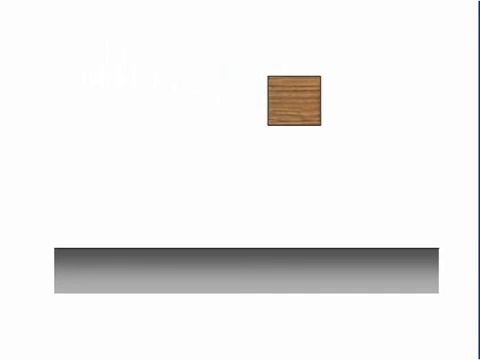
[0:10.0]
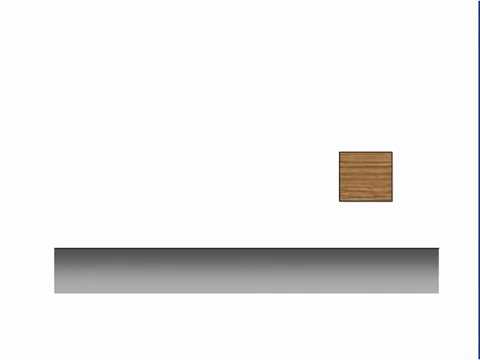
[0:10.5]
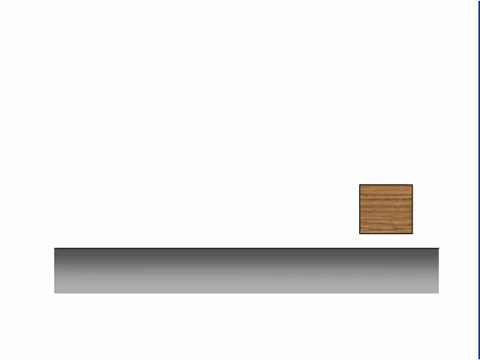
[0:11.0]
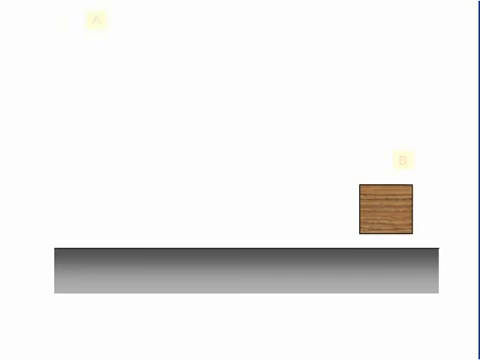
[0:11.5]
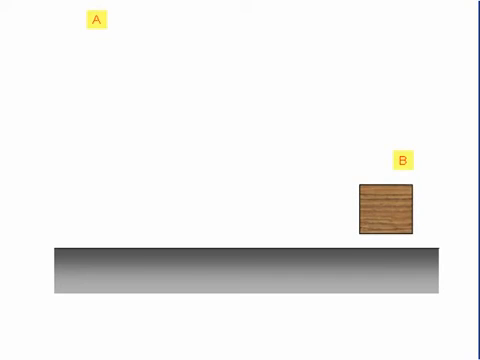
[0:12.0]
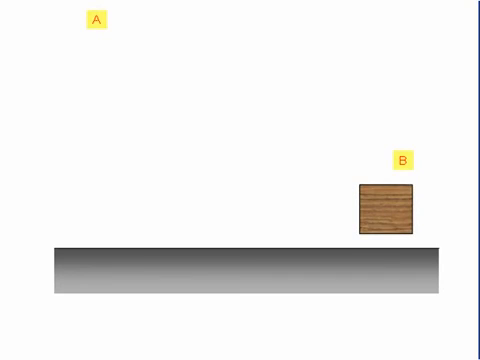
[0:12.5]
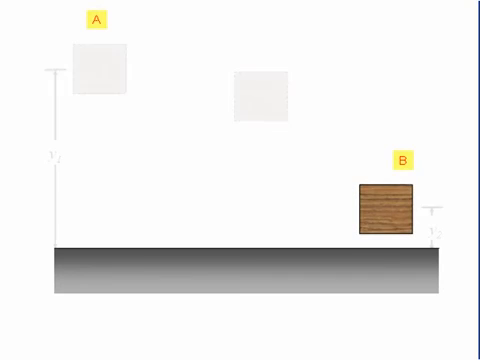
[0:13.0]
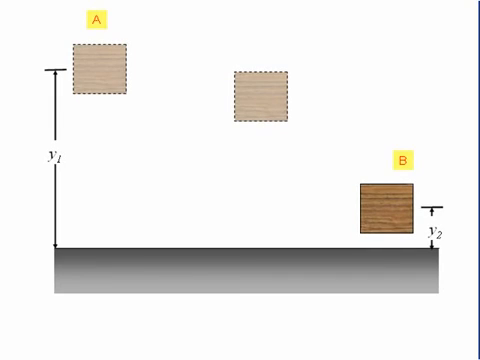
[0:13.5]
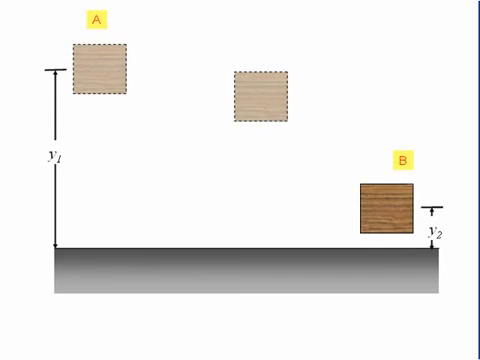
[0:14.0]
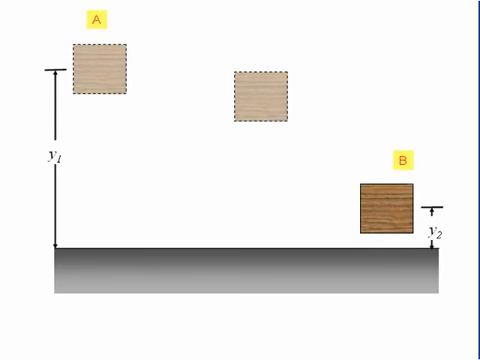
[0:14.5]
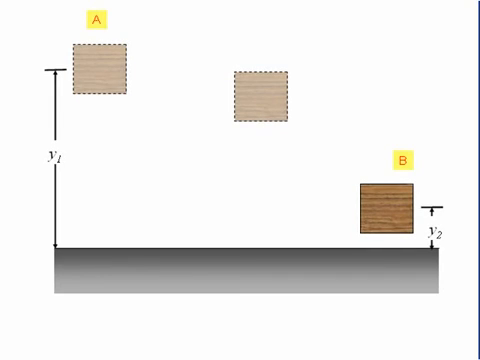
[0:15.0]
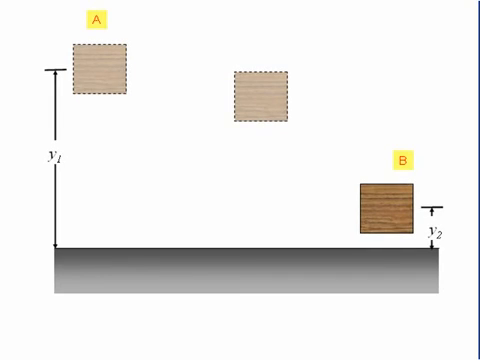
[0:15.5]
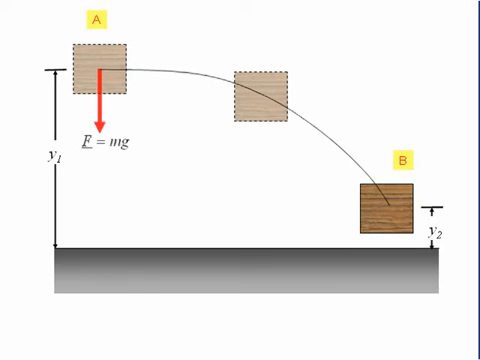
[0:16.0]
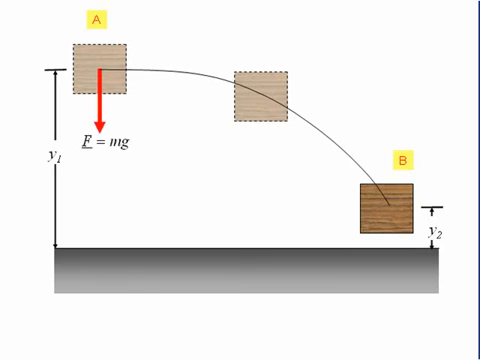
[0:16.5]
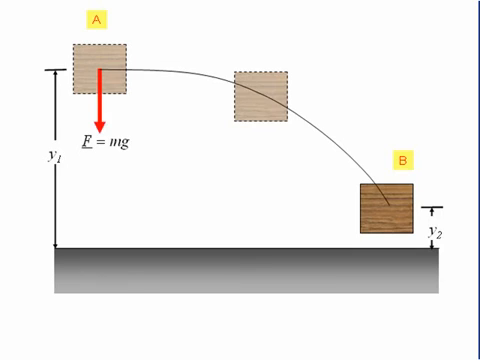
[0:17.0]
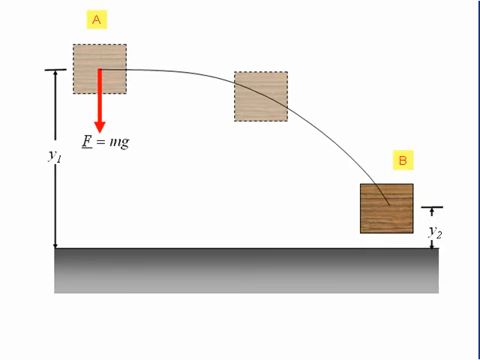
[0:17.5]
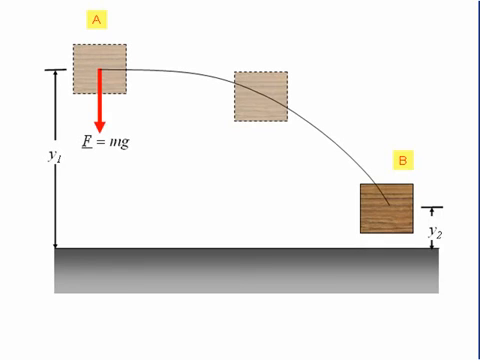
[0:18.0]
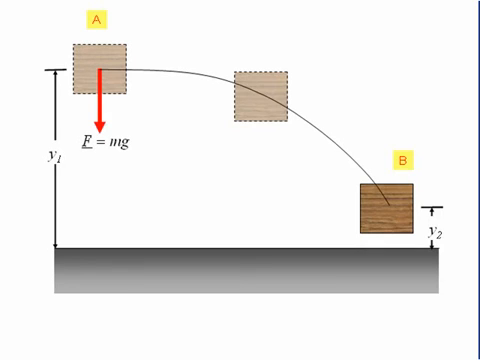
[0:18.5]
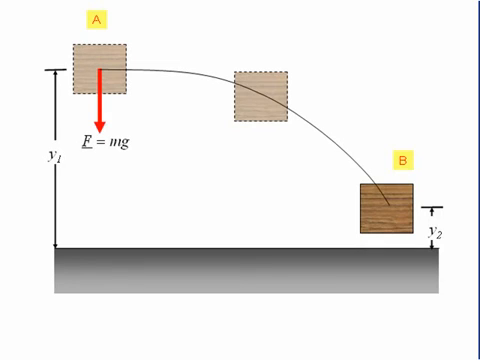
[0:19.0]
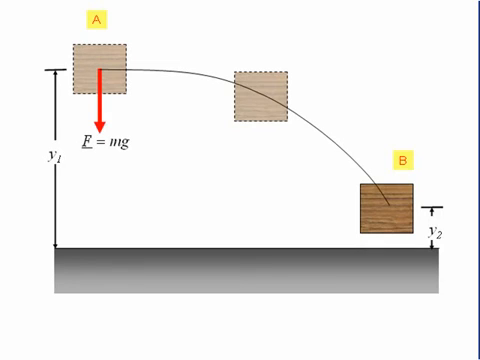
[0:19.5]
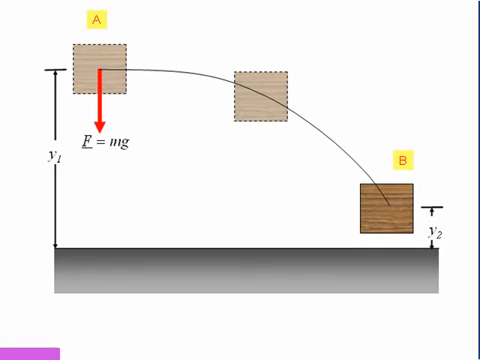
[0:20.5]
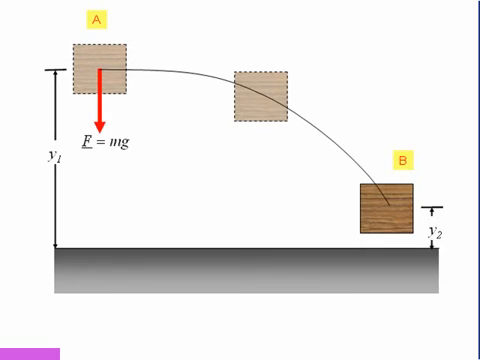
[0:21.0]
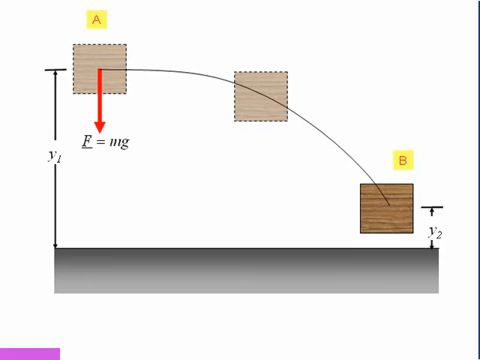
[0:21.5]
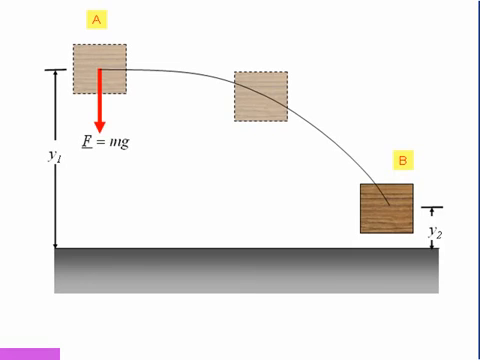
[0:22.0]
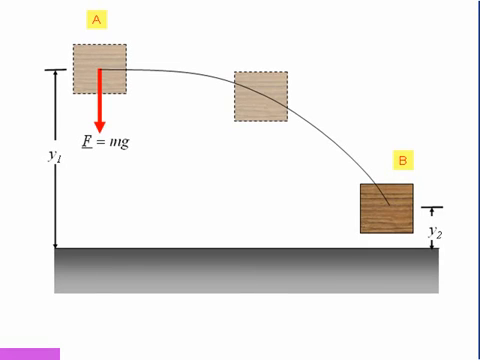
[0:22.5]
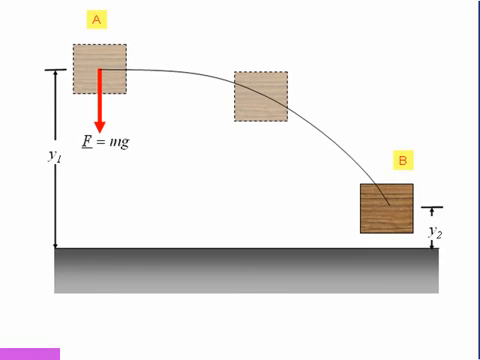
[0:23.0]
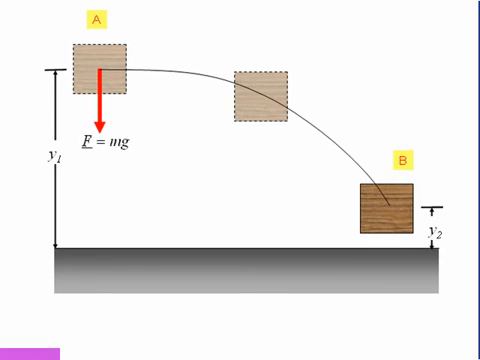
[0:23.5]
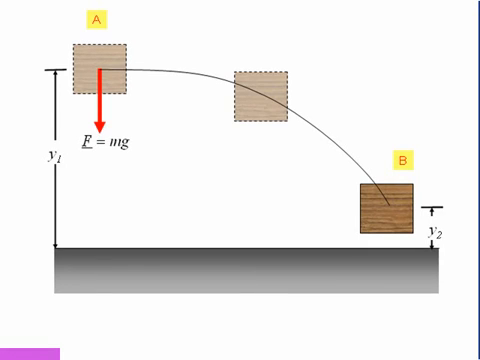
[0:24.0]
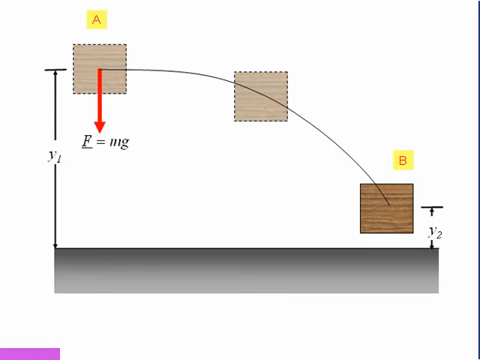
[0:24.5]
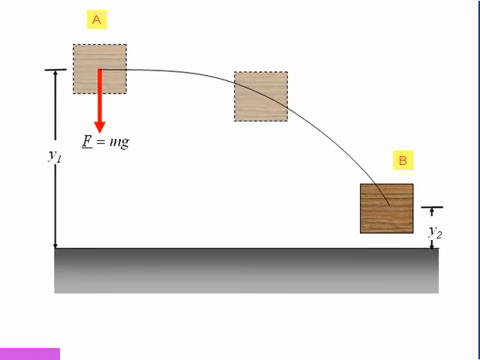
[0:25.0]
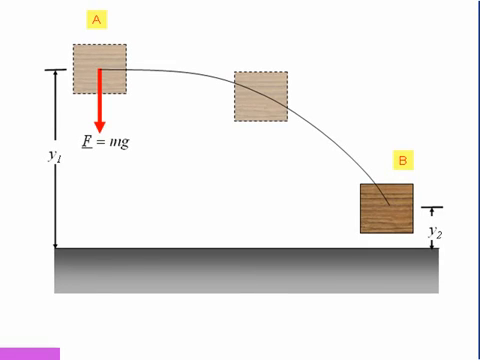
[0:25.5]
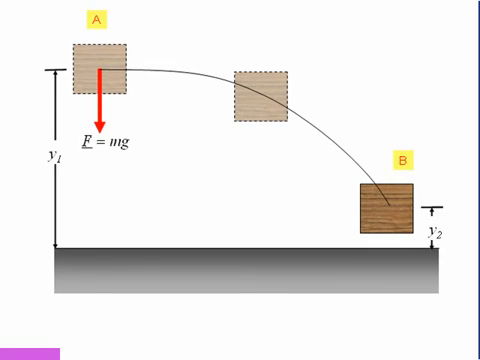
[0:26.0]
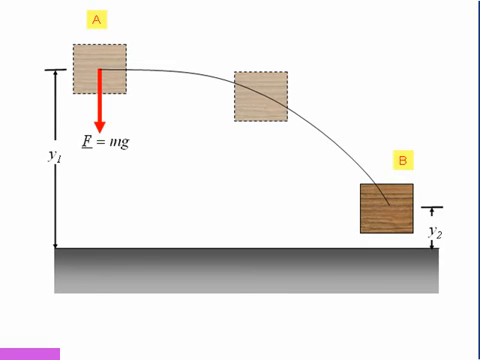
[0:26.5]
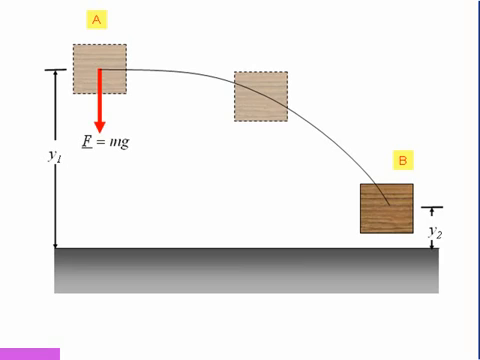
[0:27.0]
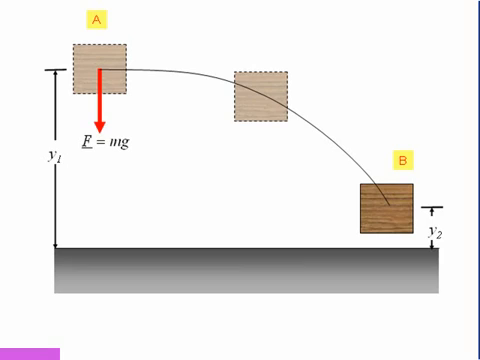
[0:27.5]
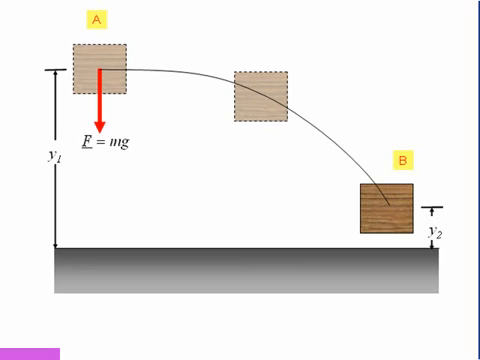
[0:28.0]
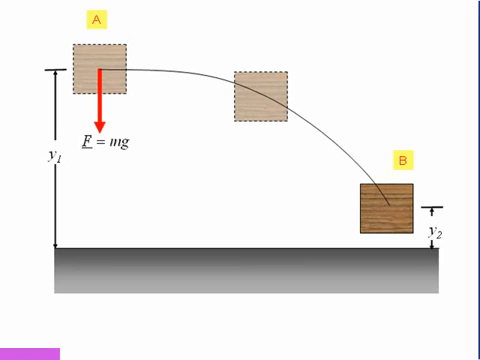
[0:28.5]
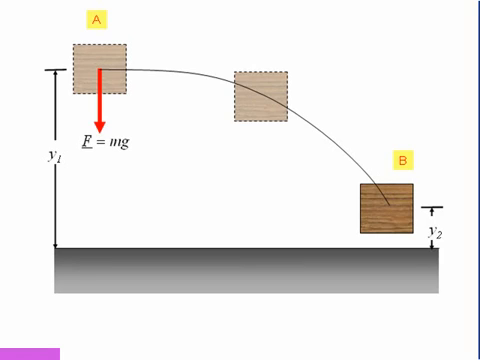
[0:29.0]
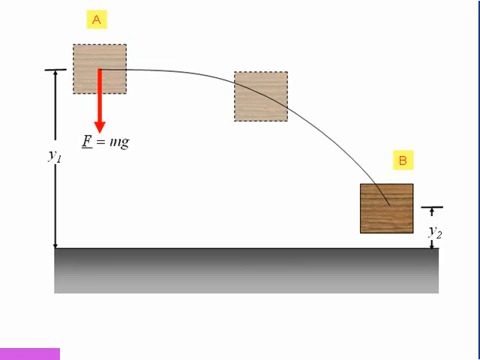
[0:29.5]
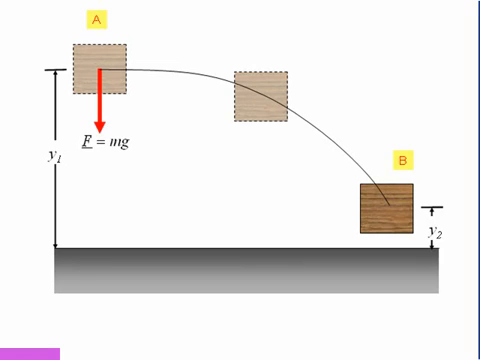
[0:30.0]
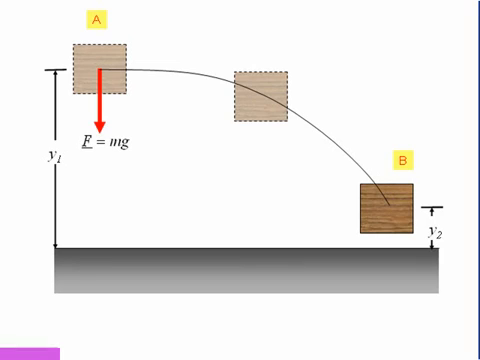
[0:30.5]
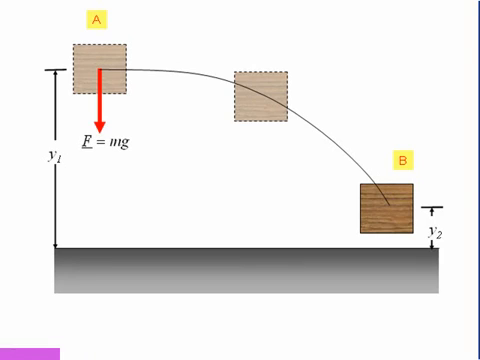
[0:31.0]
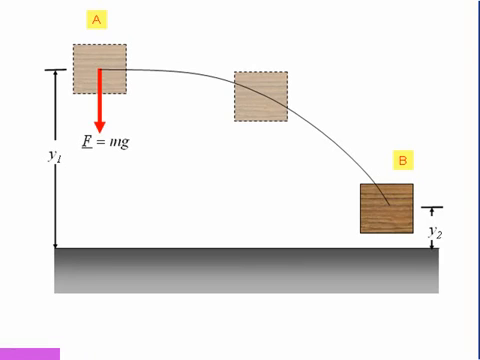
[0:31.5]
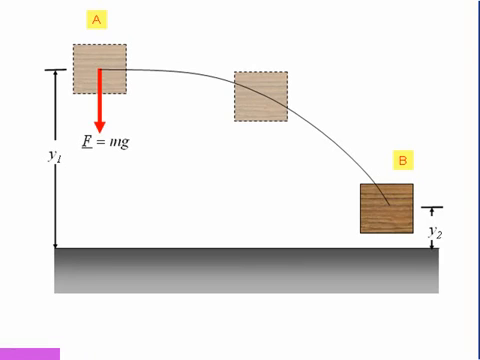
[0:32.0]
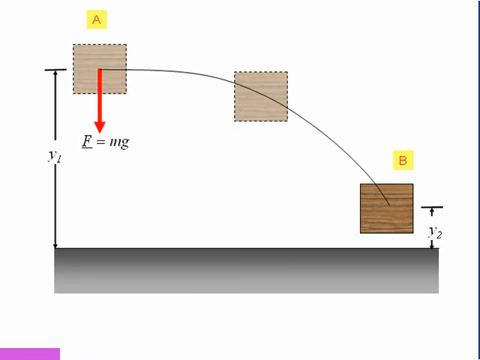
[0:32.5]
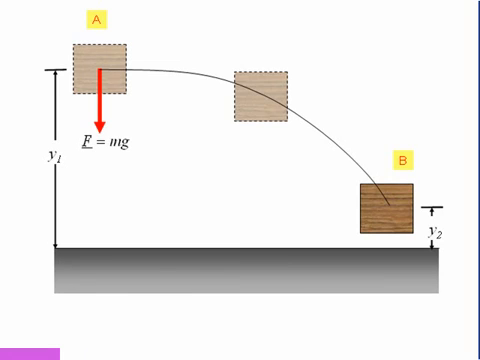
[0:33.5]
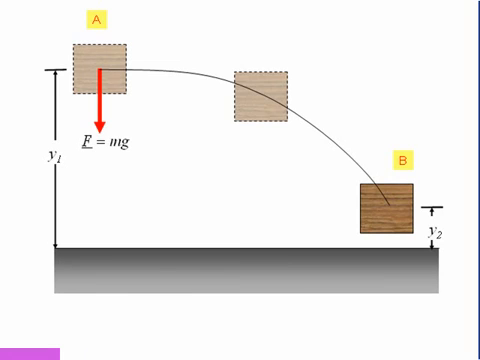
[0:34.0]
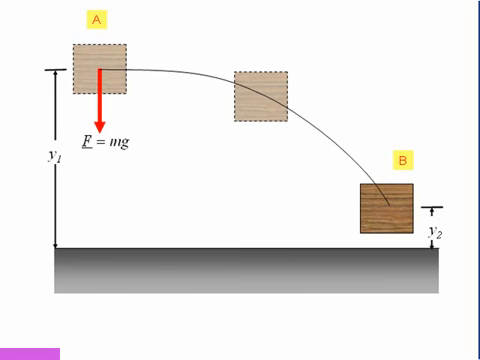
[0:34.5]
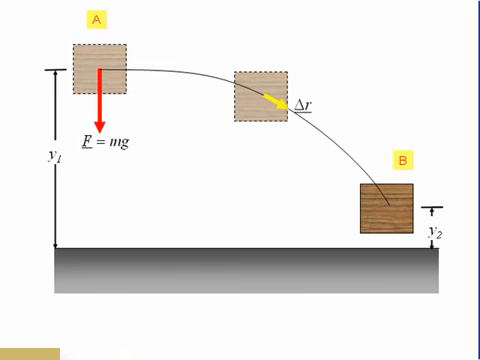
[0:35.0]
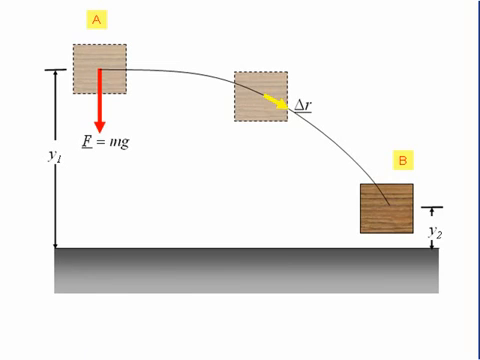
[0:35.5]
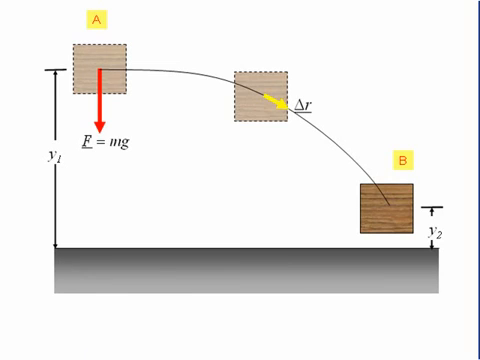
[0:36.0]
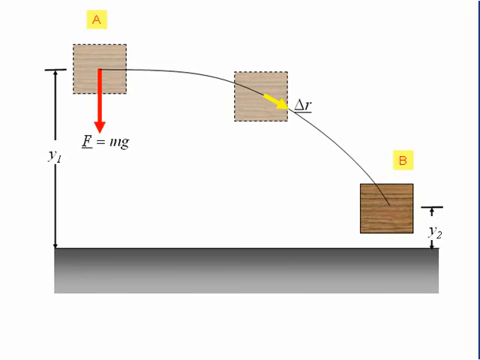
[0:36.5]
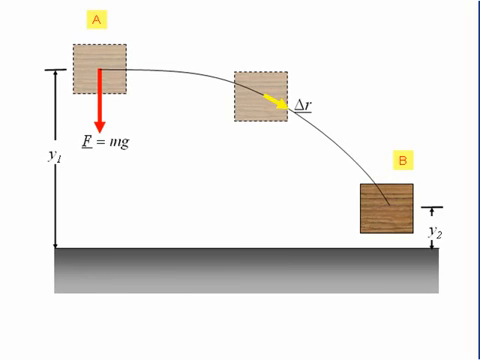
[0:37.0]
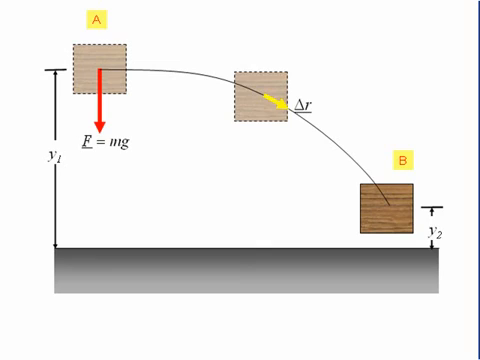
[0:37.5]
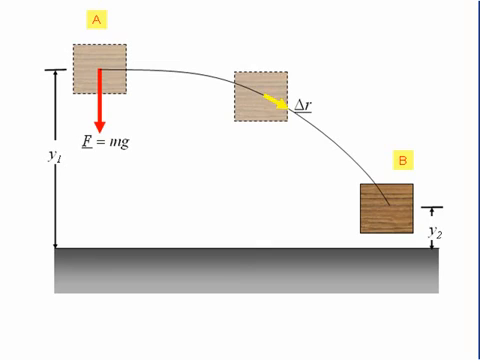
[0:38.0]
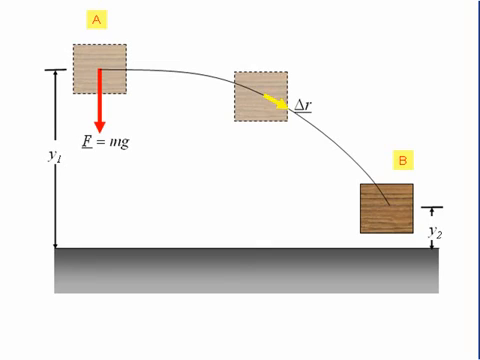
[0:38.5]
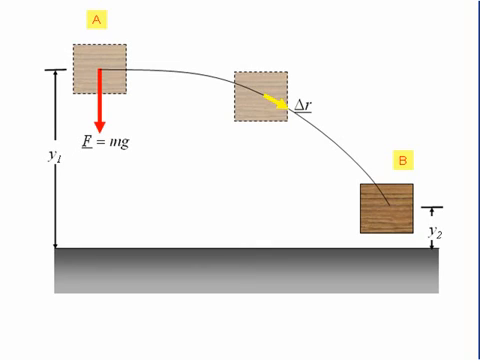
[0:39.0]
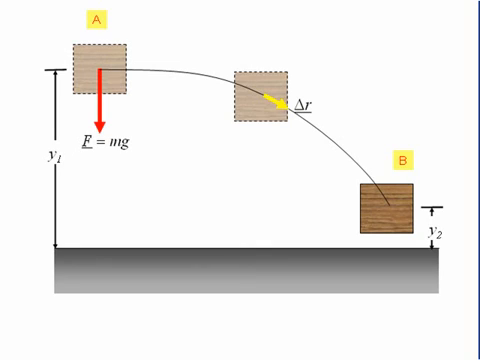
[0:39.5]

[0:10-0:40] A box with black borders moves from the centre of the screen to the bottom. It is brown and appears to have wooden patterns like a tabletop. Beneath it is a gray box with a black line along its top. The brown box moves to the lower right corner, on top of the grey box, and stops there. The point where it started is labelled A and the point where it ended up is labelled B. The three points the box moved through are shown: it came from the upper left, went to the middle, and ended at the lower right. At the original point and the middle, the boxes have dashed black outlines and a faded brown colour showing the box was there, while at point B, where the box now sits, the box has solid colours. An arrow labelled Y1 runs from the middle of box A to the top of the gray box, and an arrow labelled Y2 runs from the middle of box B to the top of the gray box. A curved line is drawn to the middle of box B, and on box B a red arrow is drawn from the middle downward, with the formula F = MG.